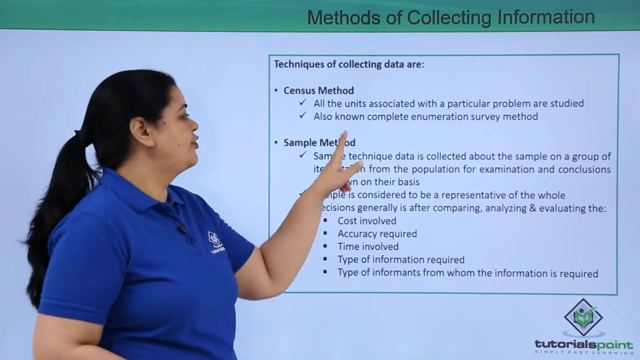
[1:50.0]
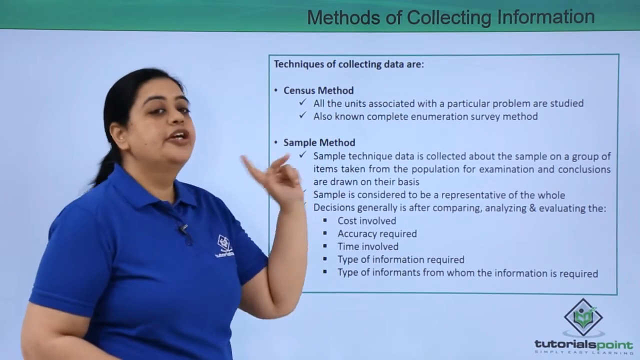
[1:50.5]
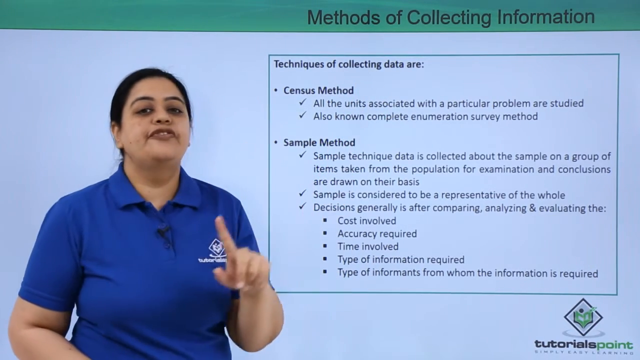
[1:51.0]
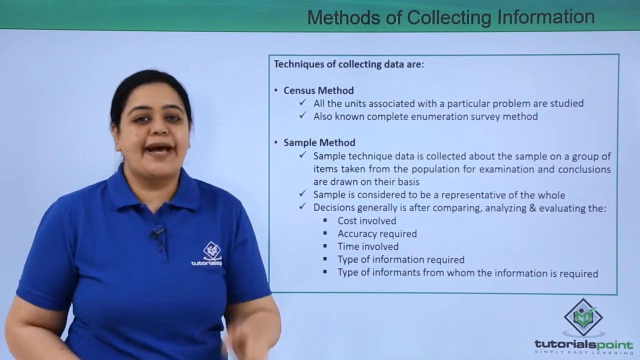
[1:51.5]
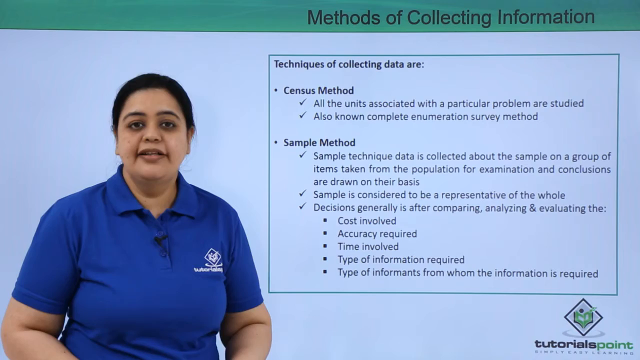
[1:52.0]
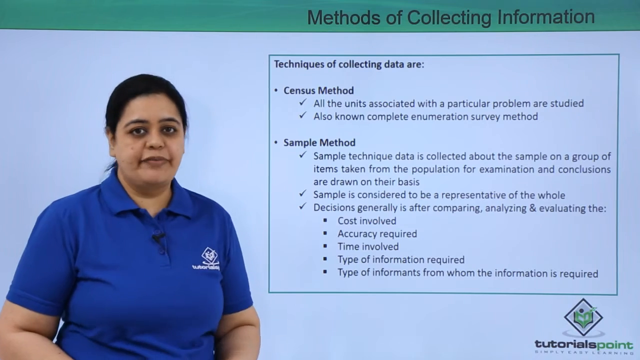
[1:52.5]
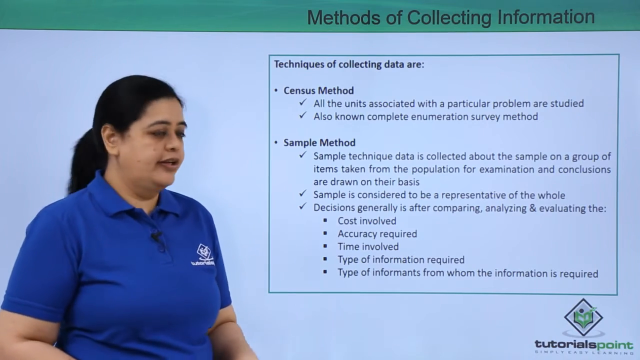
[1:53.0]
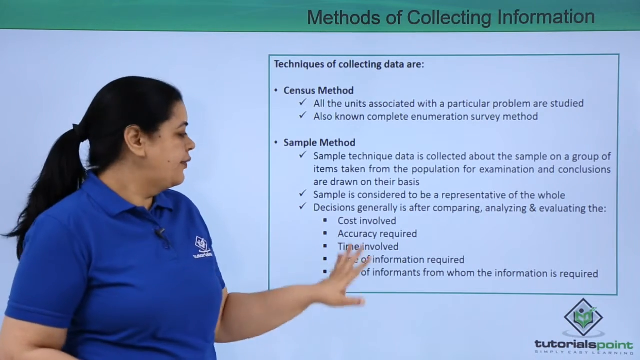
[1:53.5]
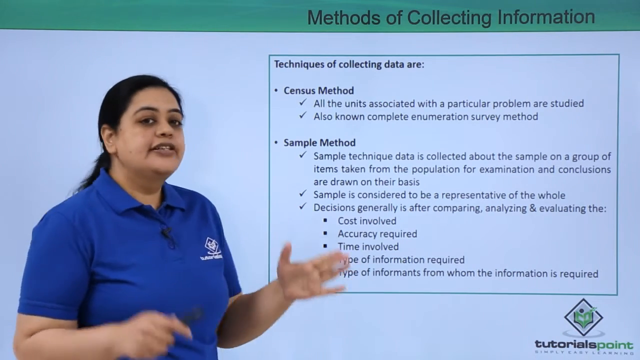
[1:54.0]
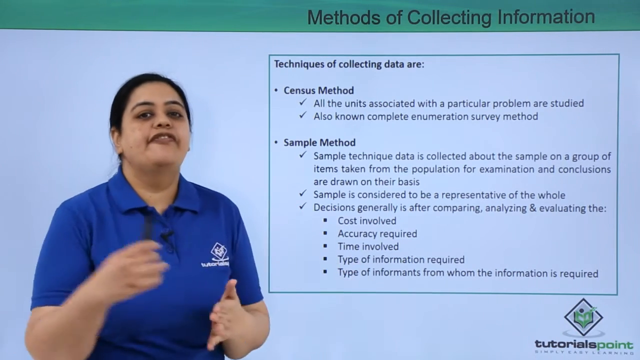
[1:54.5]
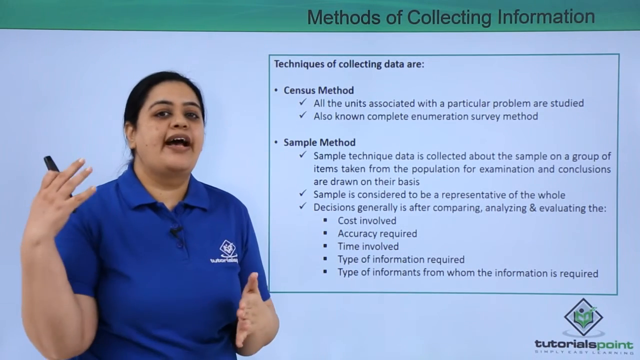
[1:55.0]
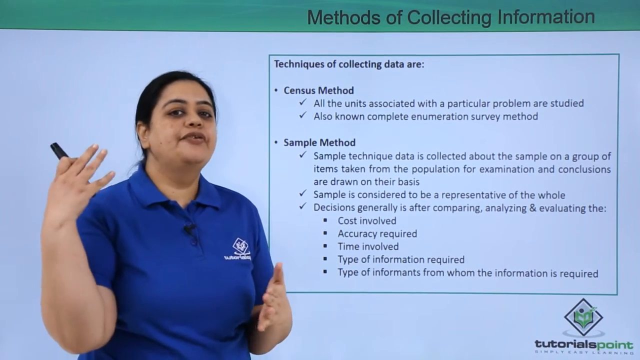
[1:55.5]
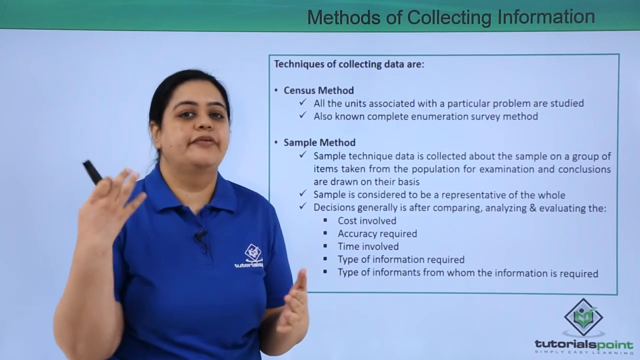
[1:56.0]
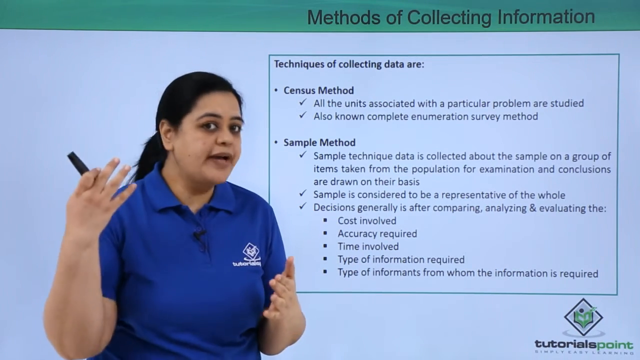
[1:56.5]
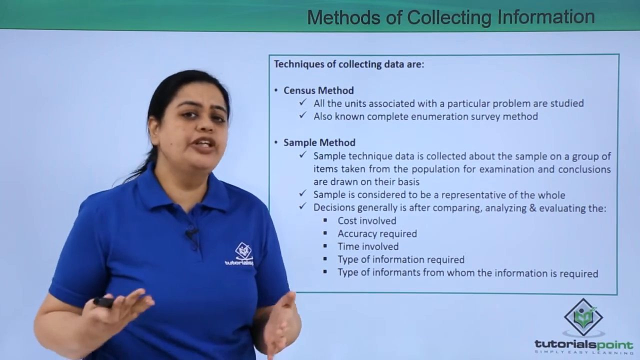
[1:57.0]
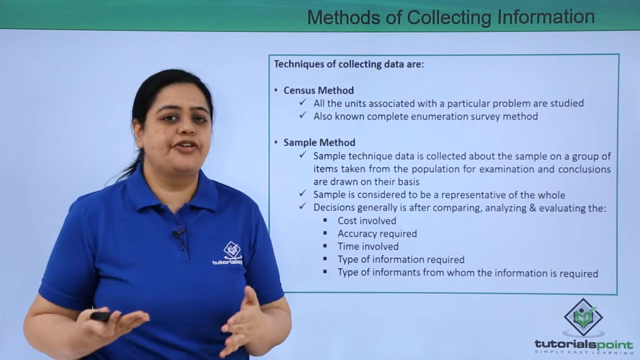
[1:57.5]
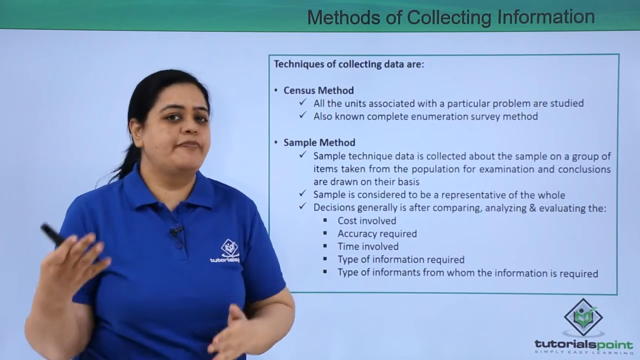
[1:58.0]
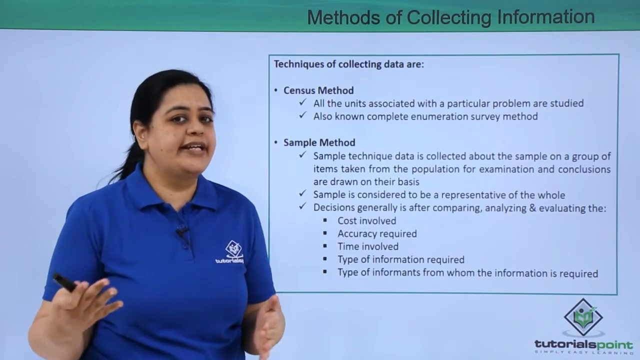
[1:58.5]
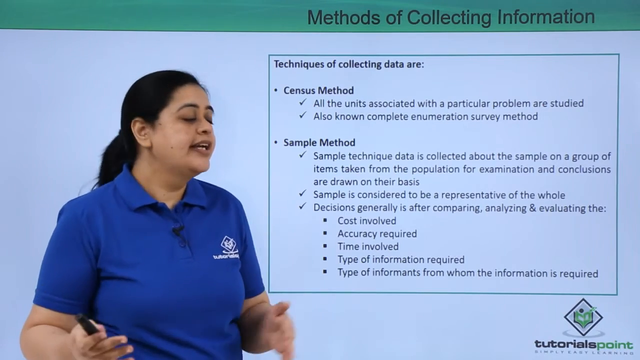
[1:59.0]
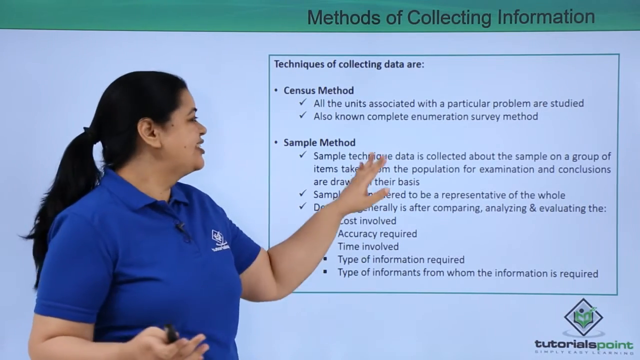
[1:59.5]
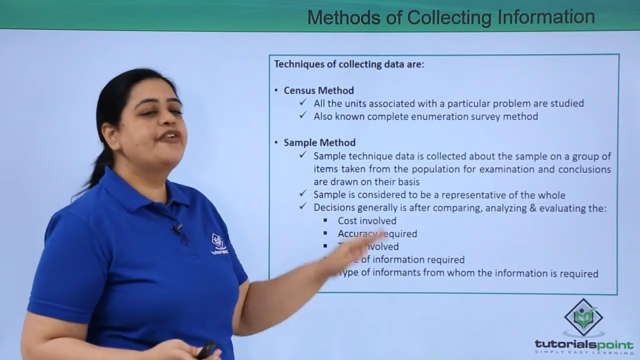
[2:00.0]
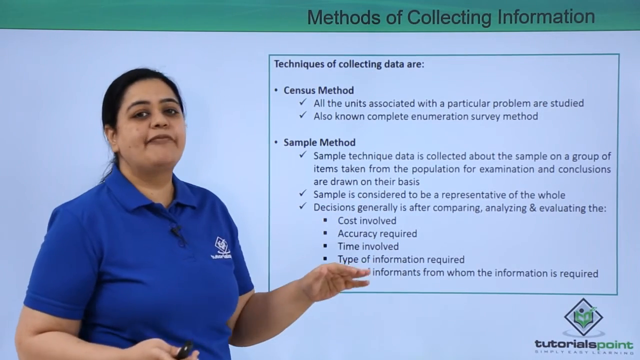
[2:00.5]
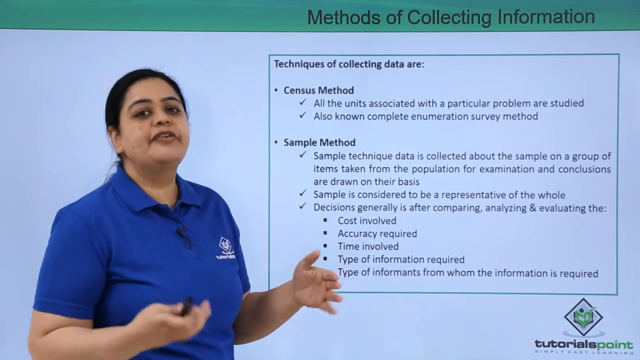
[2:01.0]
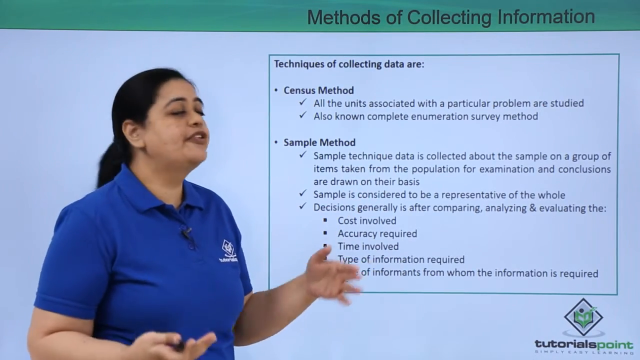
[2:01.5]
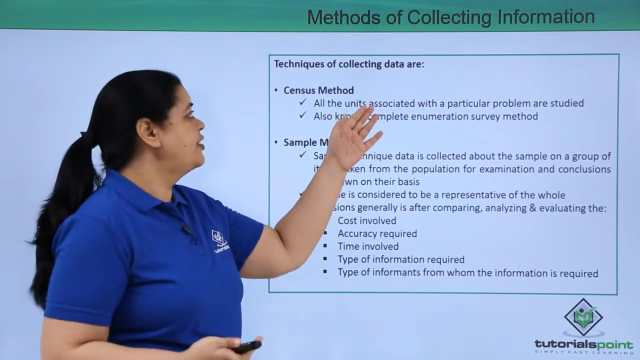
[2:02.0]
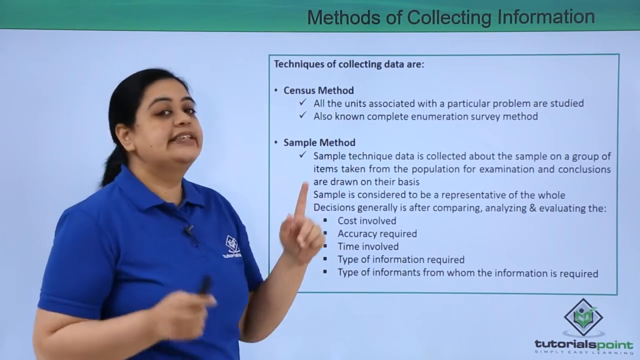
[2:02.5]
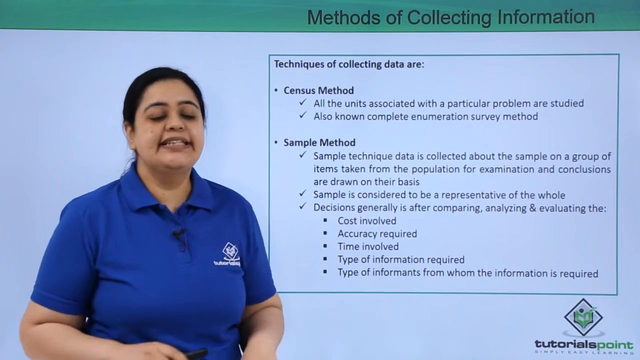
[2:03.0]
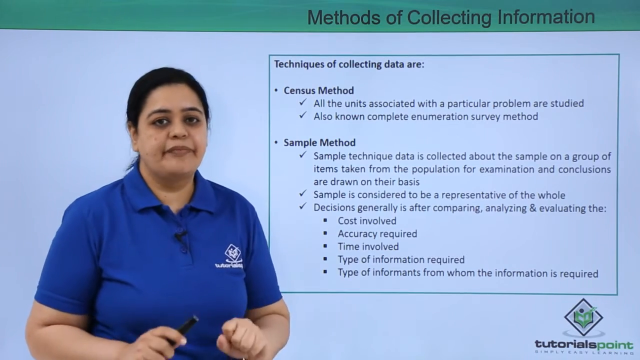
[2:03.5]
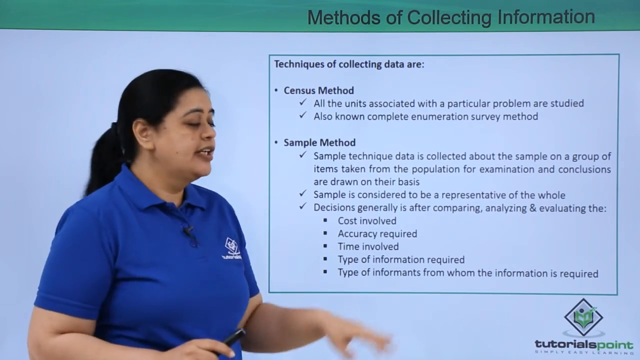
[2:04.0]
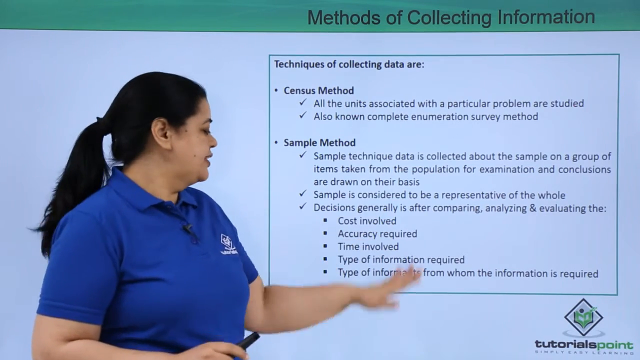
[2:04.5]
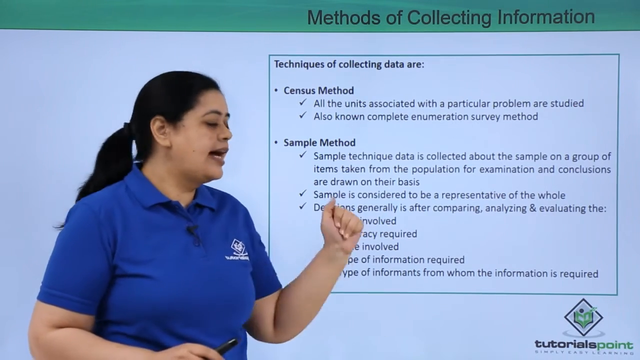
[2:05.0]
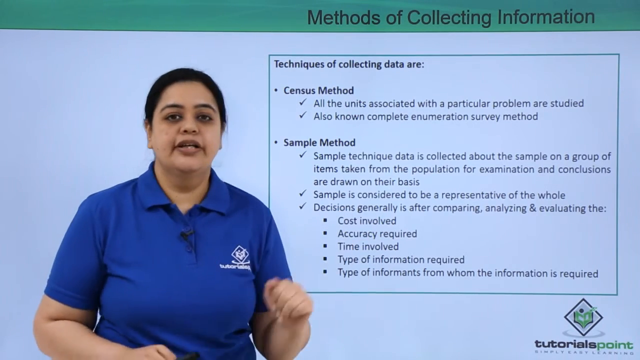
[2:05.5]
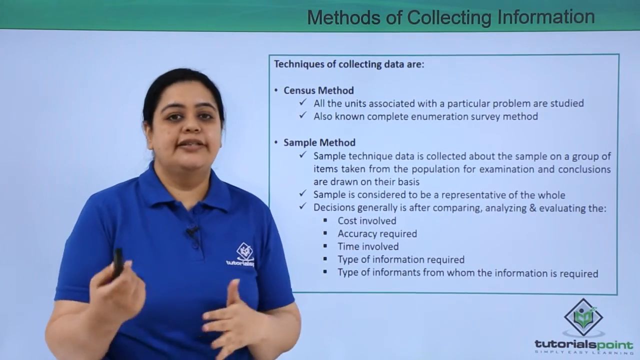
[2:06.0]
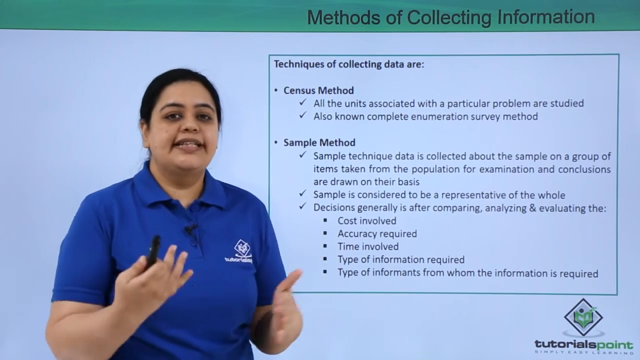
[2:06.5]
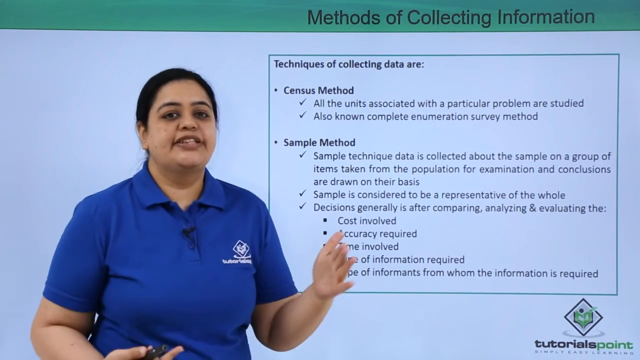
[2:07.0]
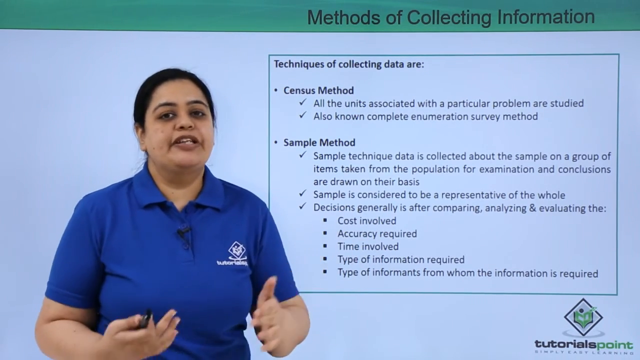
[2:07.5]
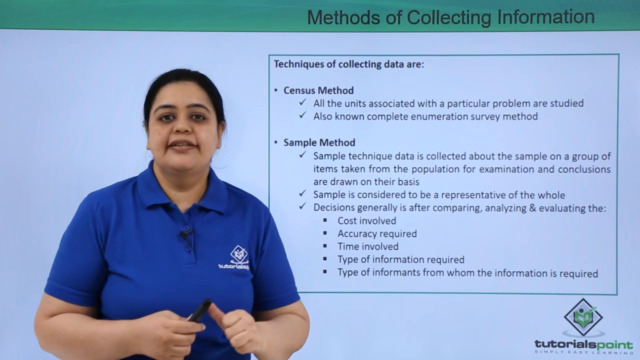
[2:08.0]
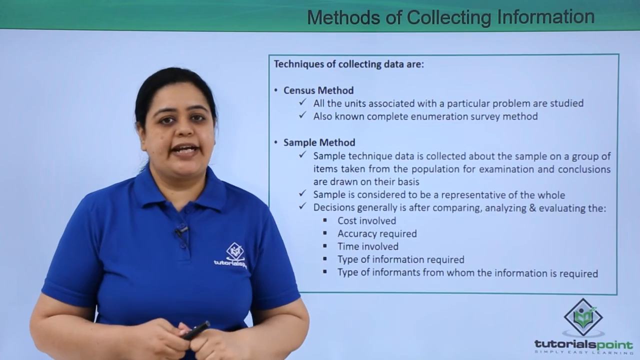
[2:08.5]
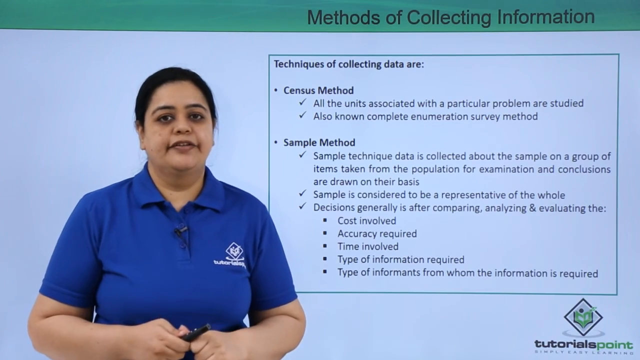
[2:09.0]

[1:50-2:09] The woman continues her lecture. She wears her royal blue uniform polo shirt with the company logo on the upper right chest area. Something black on her shirt may be buttons or possibly a black microphone. Her long dark hair is pulled back in a loose, low ponytail. Two moles on her face are clearly visible when she turns slightly to the side. She apparently still holds the same black marker. She gestures quite a bit toward the bullet points or check-mark points printed on the PowerPoint beside and behind her, in this lecture about methods of collecting information. The video does not glitch.